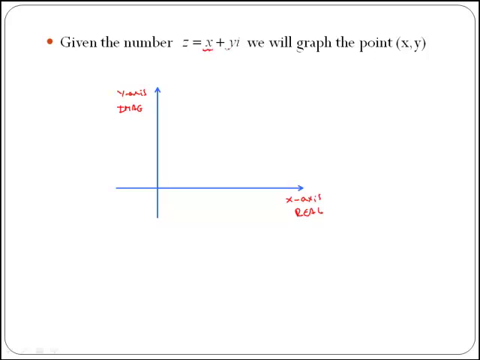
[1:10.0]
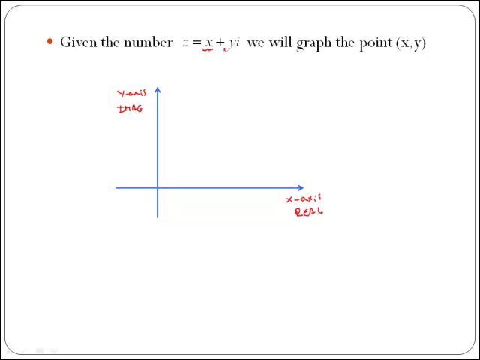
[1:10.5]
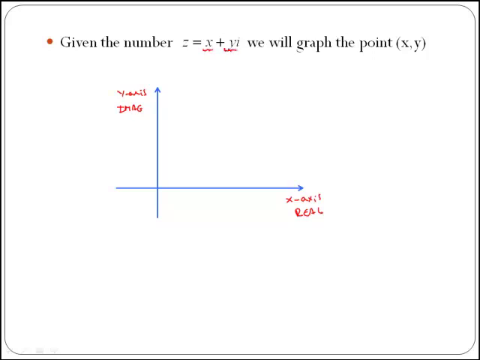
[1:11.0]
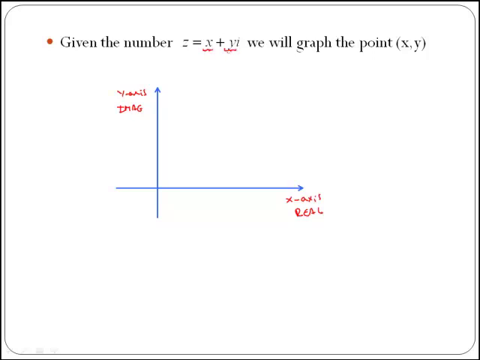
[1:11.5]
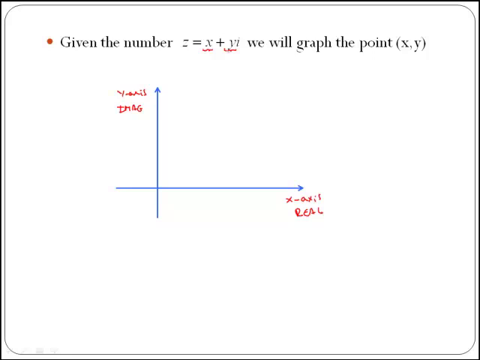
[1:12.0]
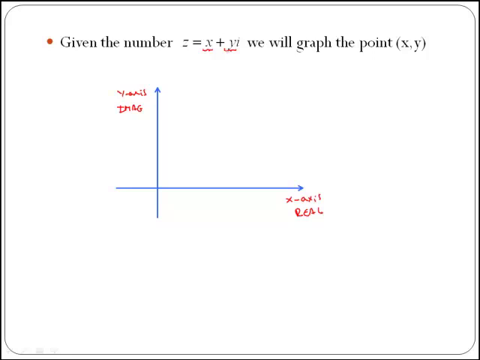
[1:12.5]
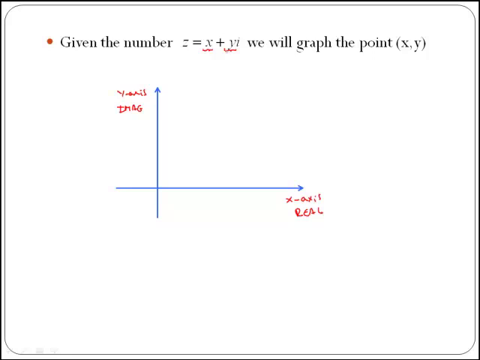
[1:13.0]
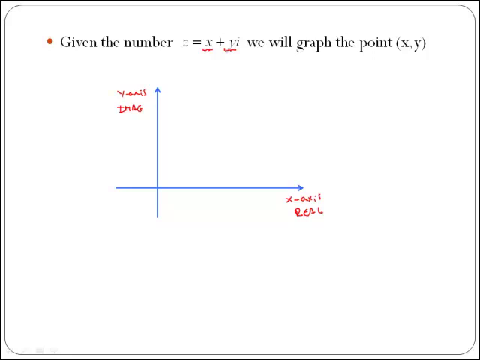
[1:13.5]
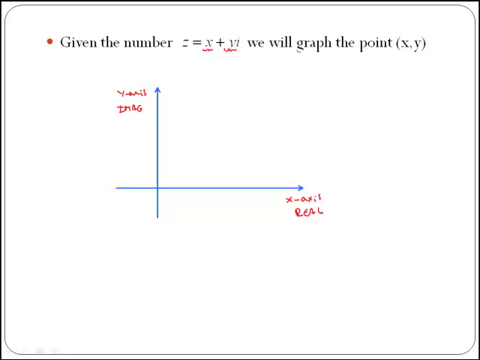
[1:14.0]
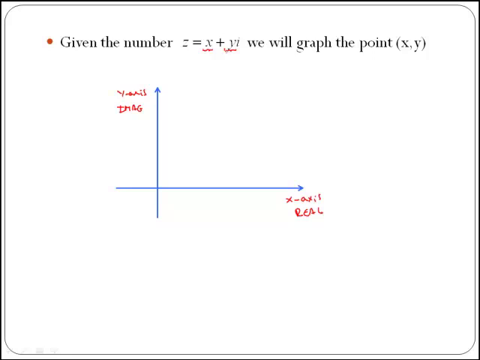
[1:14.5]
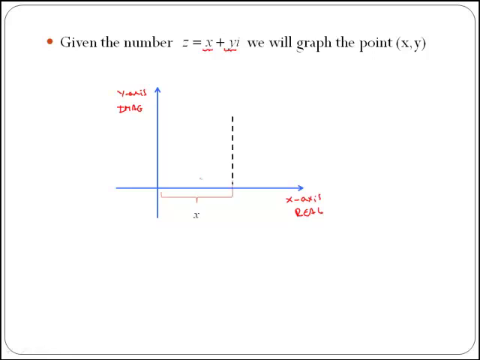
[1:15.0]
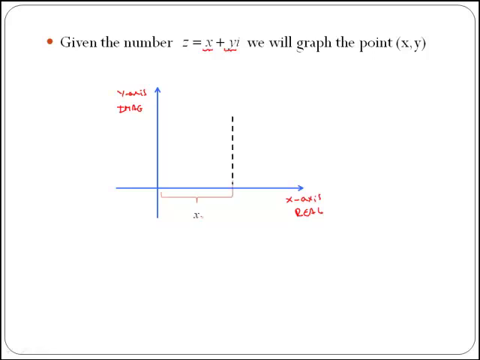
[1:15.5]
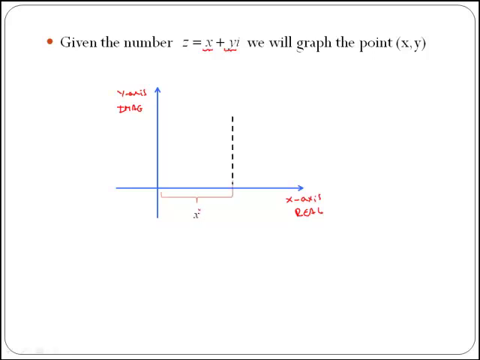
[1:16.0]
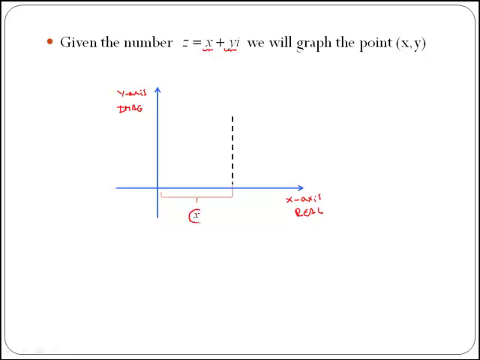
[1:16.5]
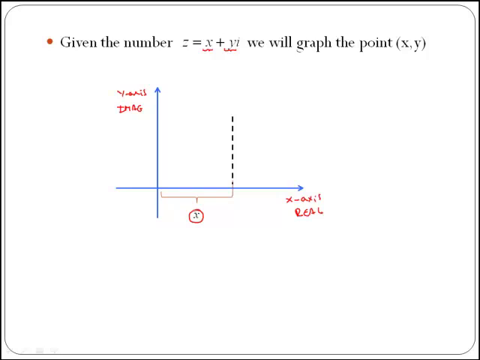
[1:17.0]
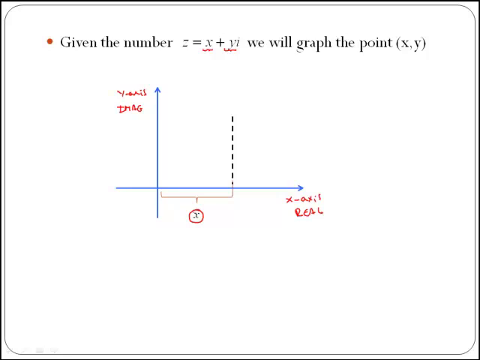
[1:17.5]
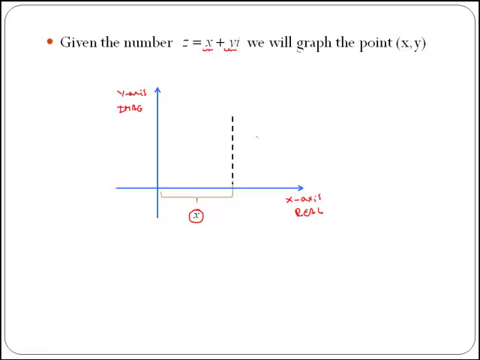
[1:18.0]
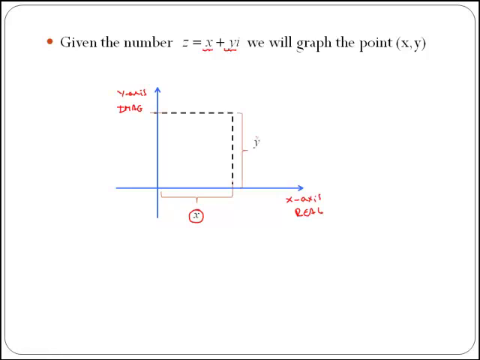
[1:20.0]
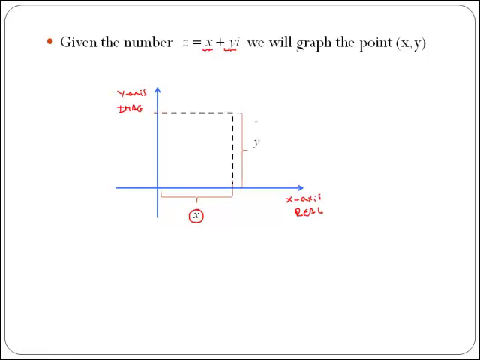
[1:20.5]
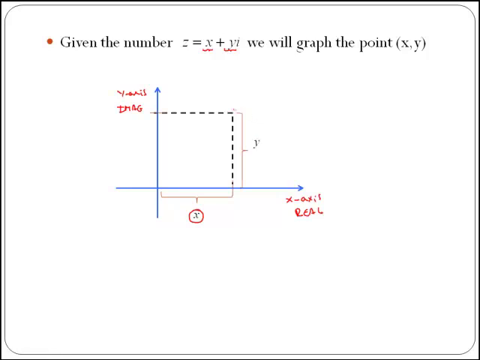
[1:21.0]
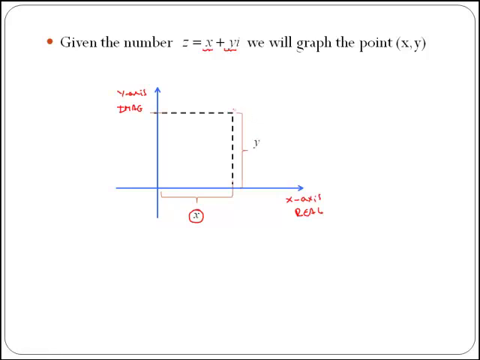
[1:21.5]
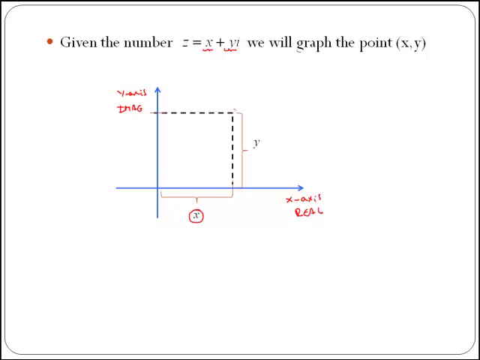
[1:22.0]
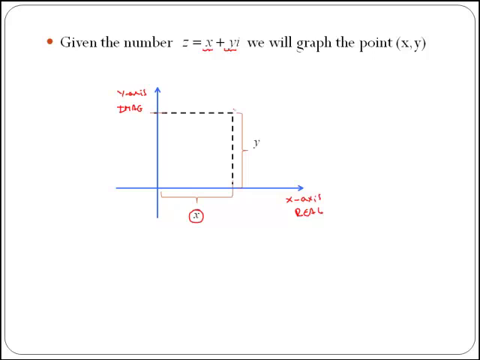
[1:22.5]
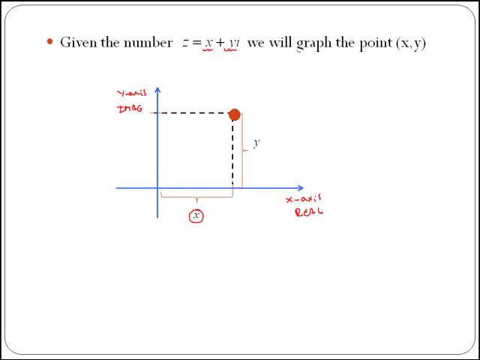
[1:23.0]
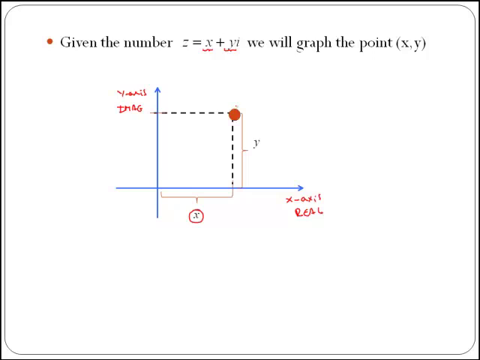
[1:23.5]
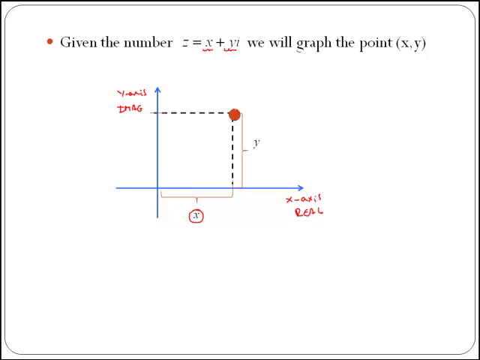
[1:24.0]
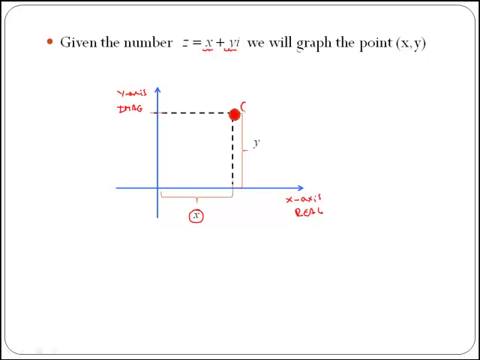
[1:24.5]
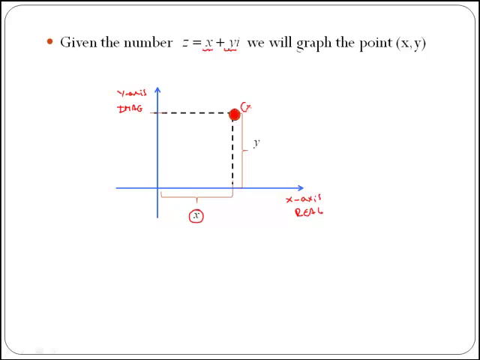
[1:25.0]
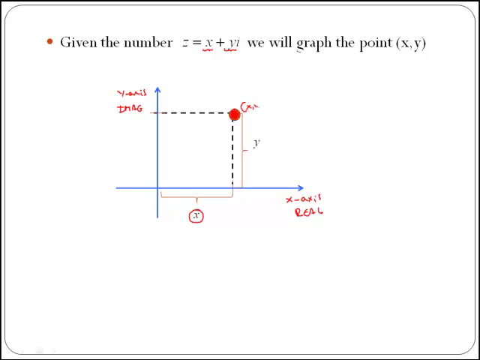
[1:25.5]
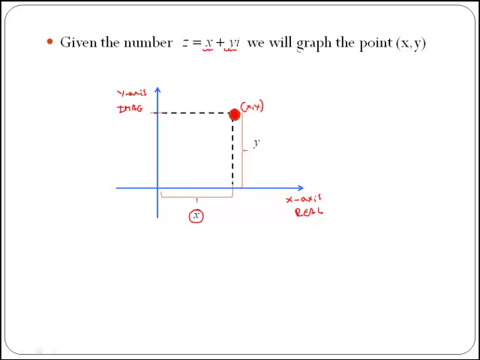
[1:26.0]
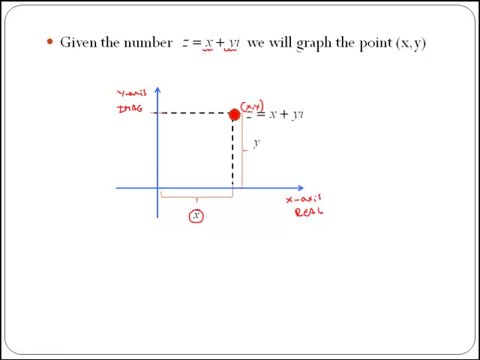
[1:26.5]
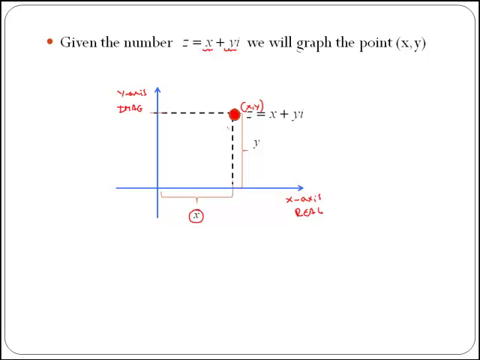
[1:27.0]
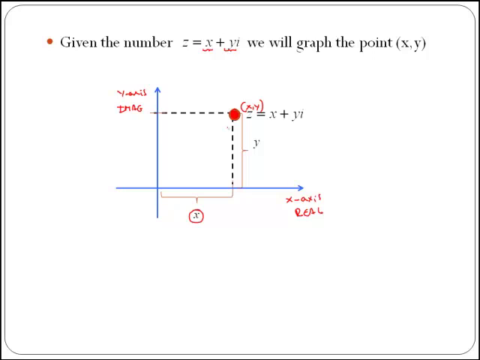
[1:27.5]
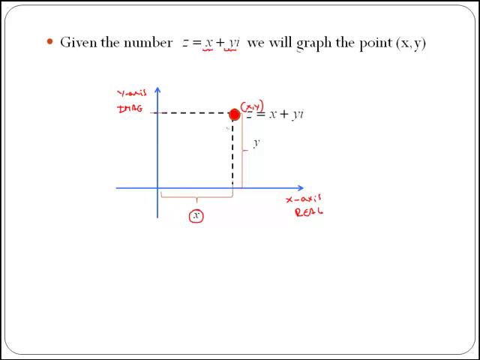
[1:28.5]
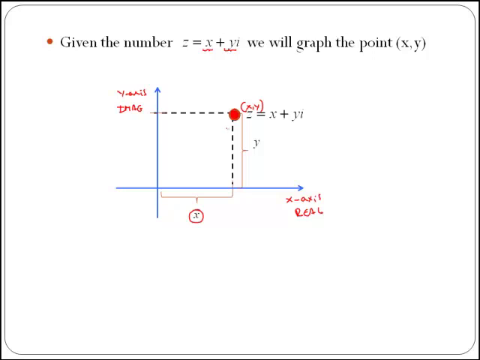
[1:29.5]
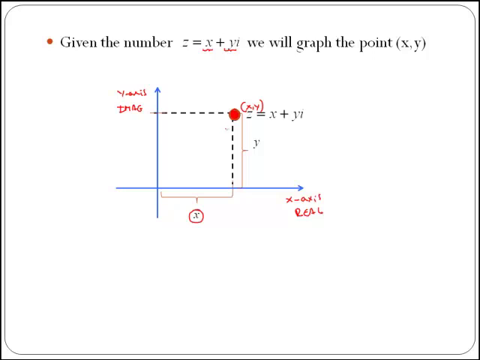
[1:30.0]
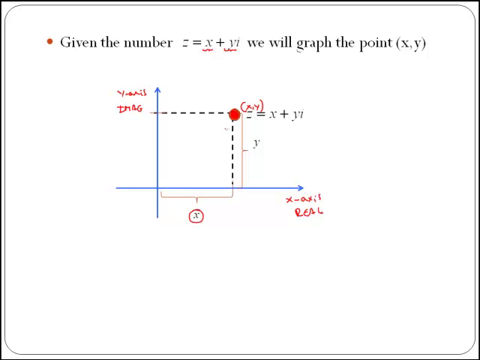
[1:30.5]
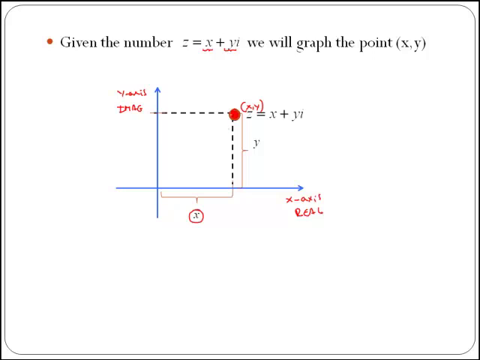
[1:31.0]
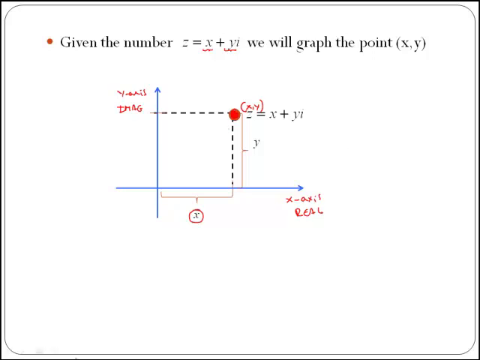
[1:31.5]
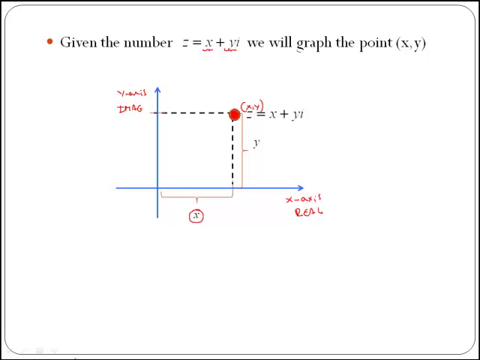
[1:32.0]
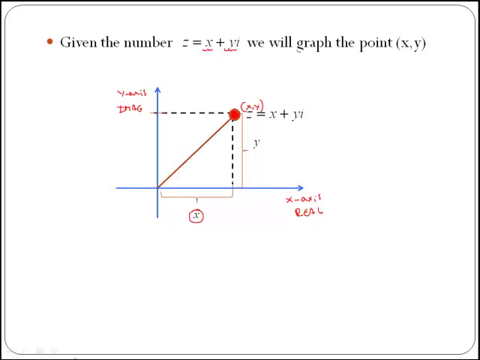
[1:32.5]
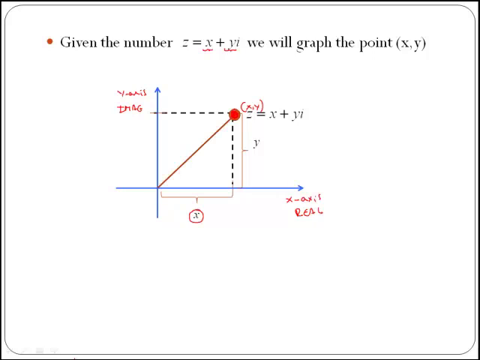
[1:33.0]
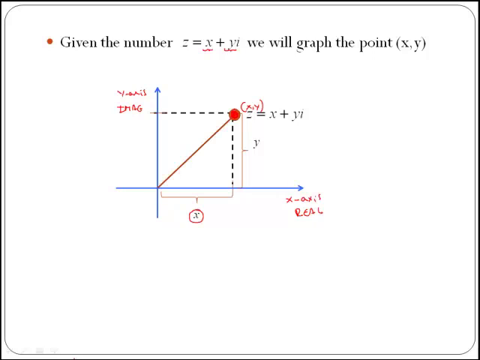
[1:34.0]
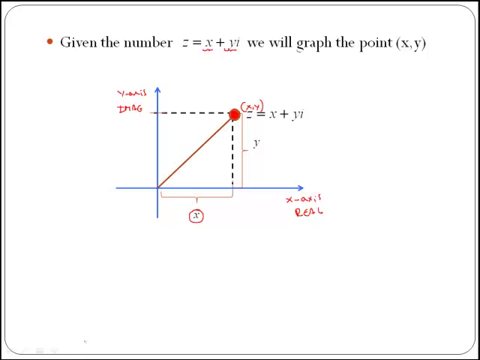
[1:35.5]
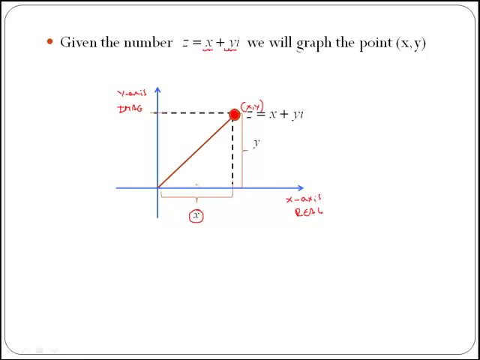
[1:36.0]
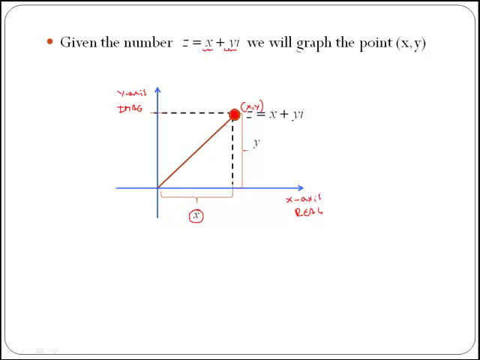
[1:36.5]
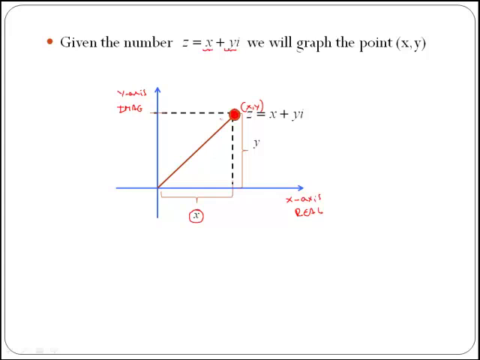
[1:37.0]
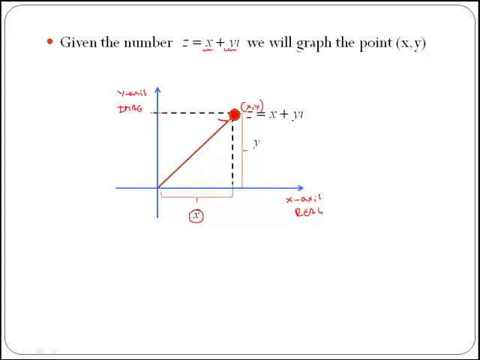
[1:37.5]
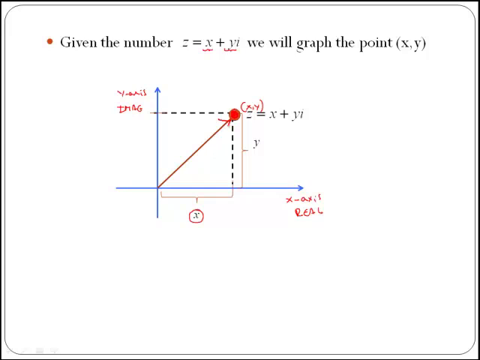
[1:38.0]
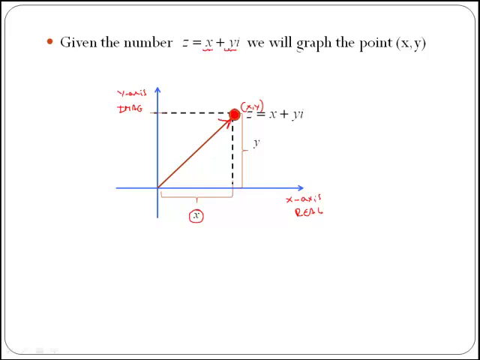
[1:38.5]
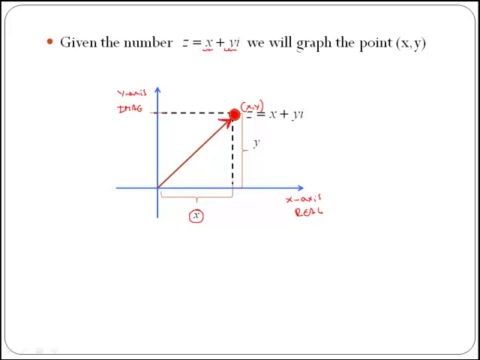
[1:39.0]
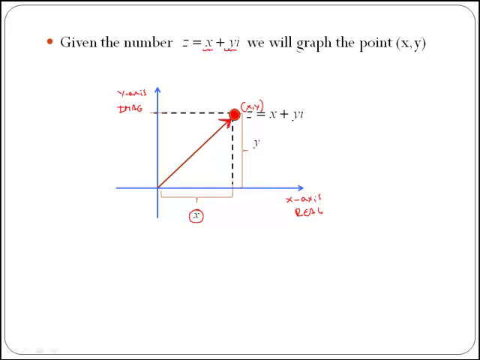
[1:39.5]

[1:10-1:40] The slide has a white background and gray border, with a bullet point: "given the number z = x + yi, we'll graph the point xy," with a red squiggly line under the x. Blue lines with arrows form a horizontal and a vertical axis. The vertical line is labeled y and the horizontal line x, each with handwritten writing that is hard to read. A squiggly line is then drawn under the y. From where the horizontal and vertical lines meet, a faded line goes out and is marked x at roughly a halfway point on the blue line. Black dots go up from there, and black dots or lines come across from the y until they meet, and a red dot is placed where the x and y lines meet. More red writing appears, showing "xy" and the formula. A red line goes from where the vertical and horizontal lines meet toward the red dot, and she draws an arrow to the red dot.